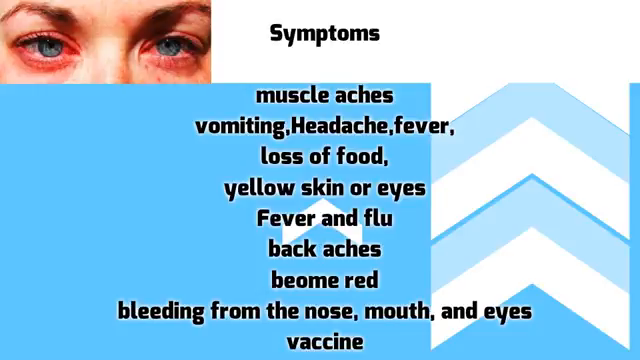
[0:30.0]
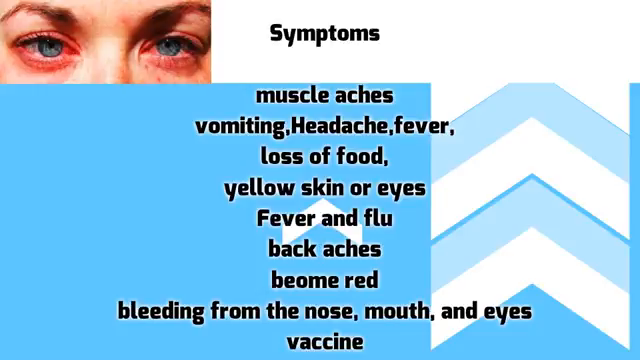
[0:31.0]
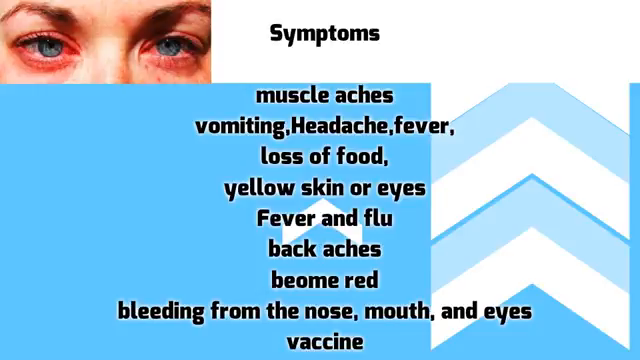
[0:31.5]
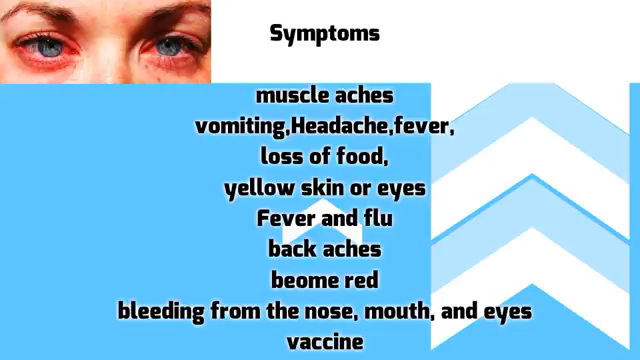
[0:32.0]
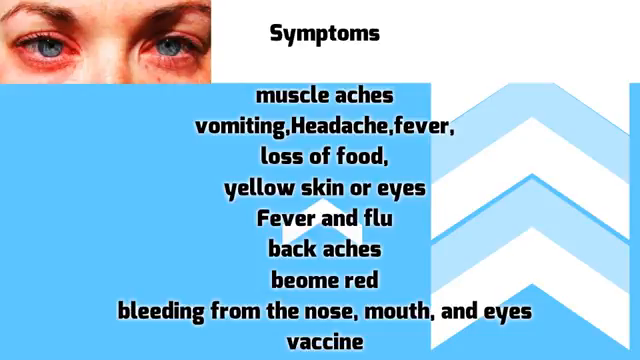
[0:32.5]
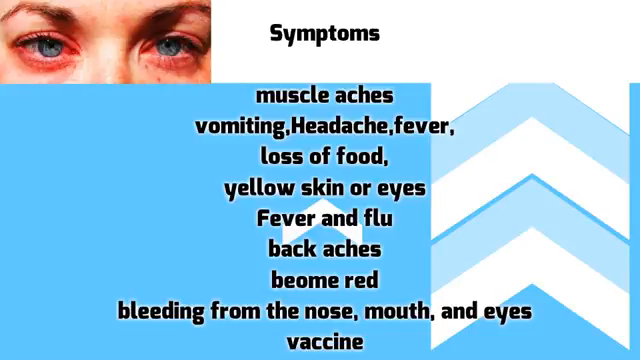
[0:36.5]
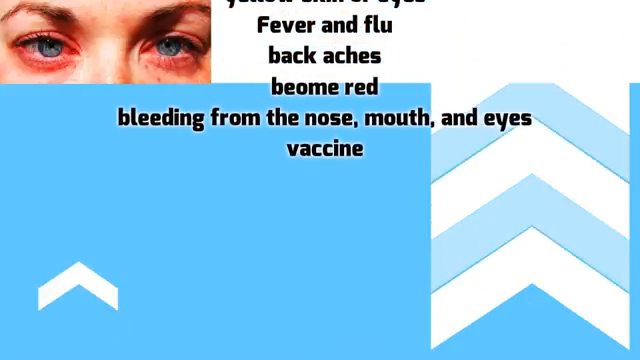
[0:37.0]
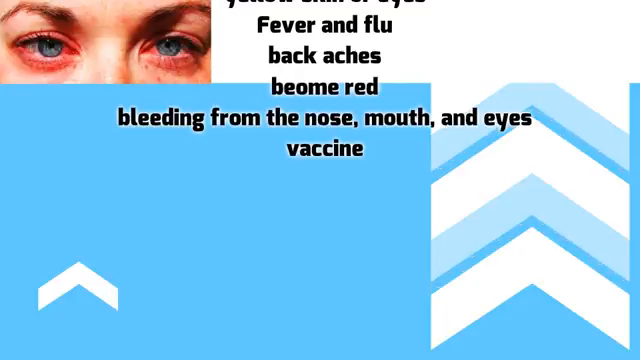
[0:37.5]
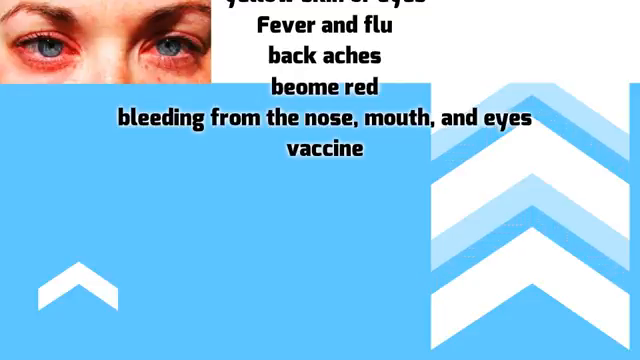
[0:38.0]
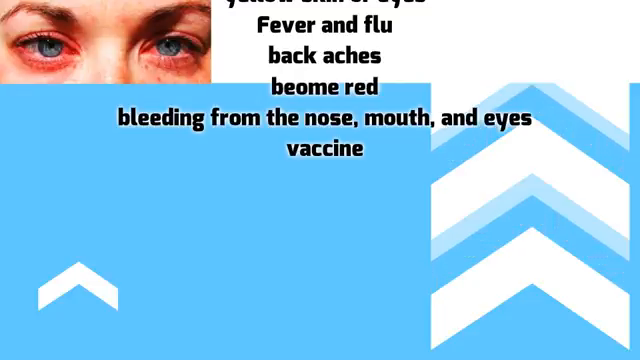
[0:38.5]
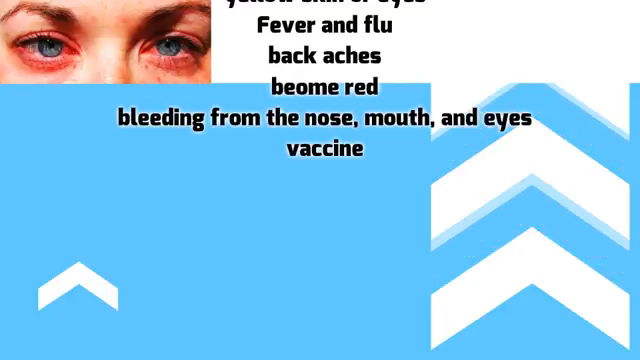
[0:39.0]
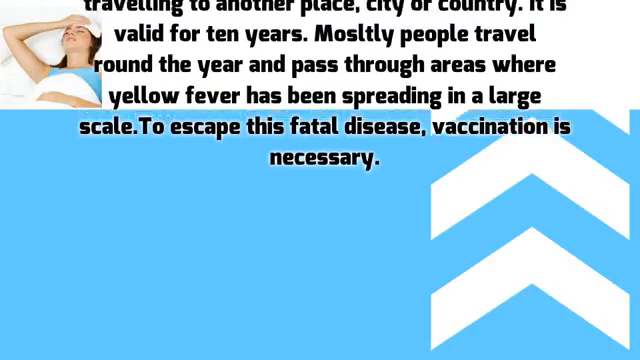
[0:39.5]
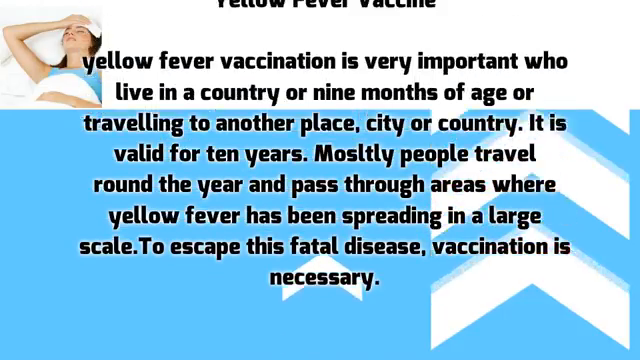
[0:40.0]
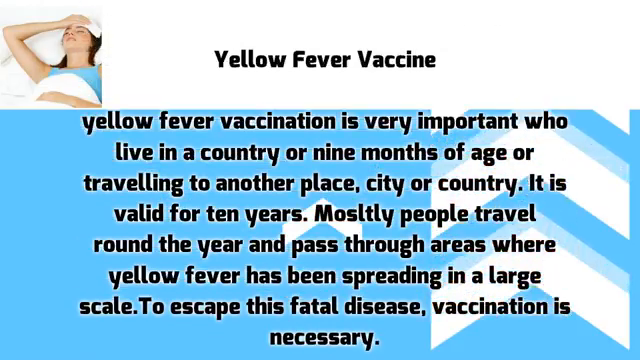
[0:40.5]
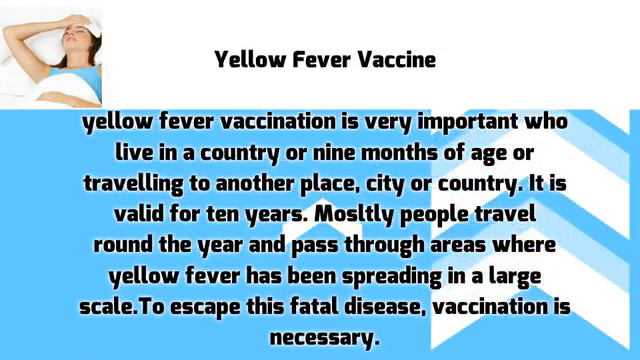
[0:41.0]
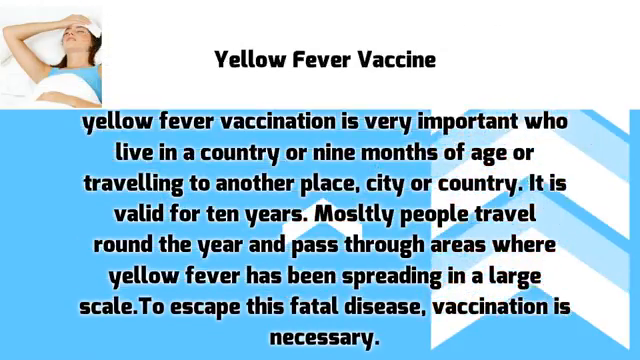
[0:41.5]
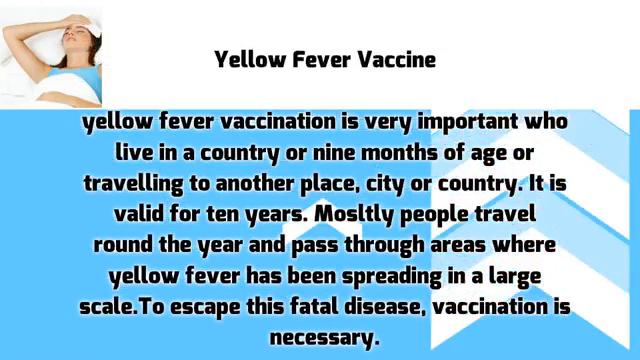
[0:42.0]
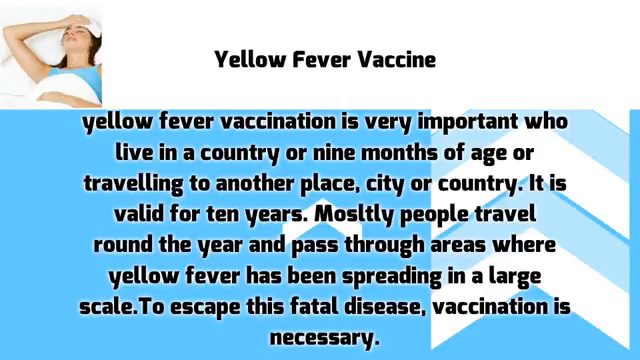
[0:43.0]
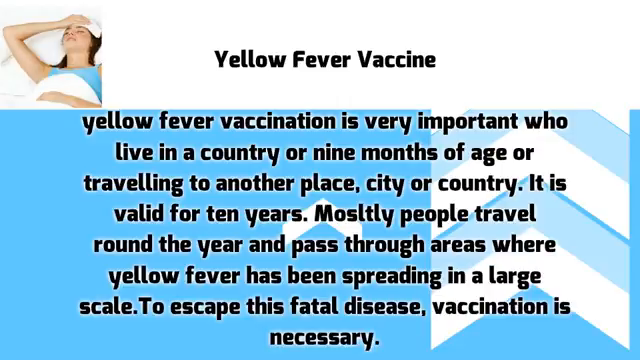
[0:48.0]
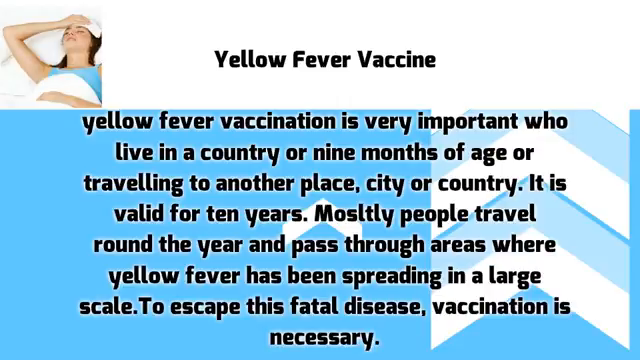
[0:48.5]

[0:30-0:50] The list of symptoms continues, with further items including backaches, eyes become red, and bleeding from the nose, mouth and eyes. The word "become" before "red" is misspelled, missing a "c". The last item on the list is the word "vaccine". The next slide has black text swiping in from the top under the heading "yellow fever vaccine". To the left is a thumbnail of a woman in a blue blouse on a bed, covered in a white sheet; she holds a towel over her forehead with her right arm and looks ill. The text states that yellow fever vaccination is very important for those who live in a country where it is prominent, are nine months of age, or are traveling to another place, city or country, and that the vaccine lasts for 10 years. It continues: "Mostly people travel around the year and pass through areas where yellow fever has been spreading in a large scale. To escape this fatal disease, vaccination is necessary." Many of the words in the text are misspelled. The yellow fever vaccine text stays on the screen.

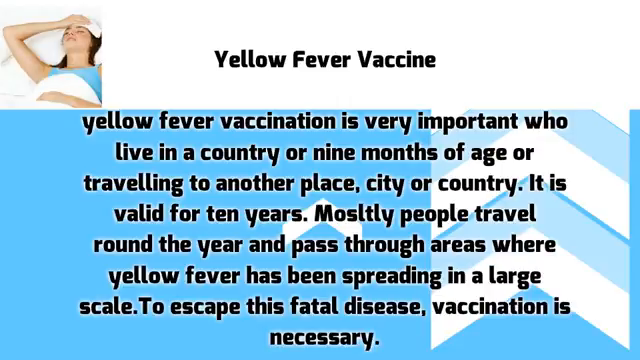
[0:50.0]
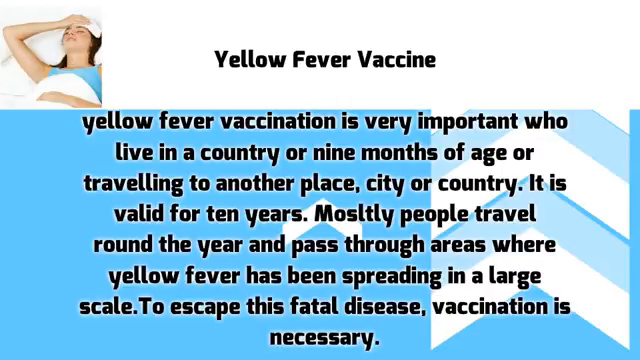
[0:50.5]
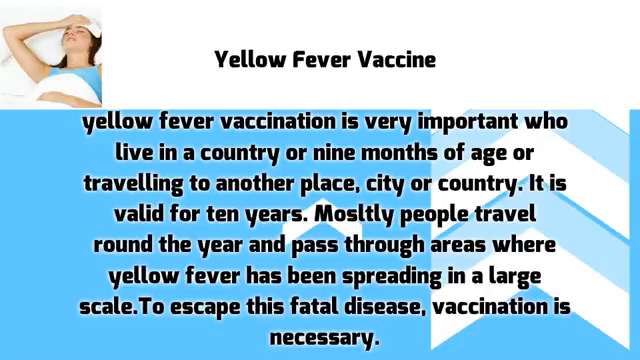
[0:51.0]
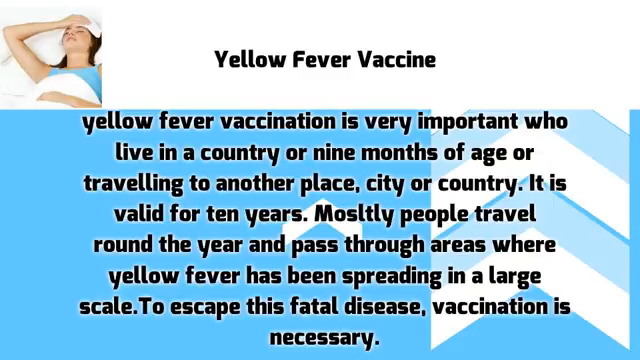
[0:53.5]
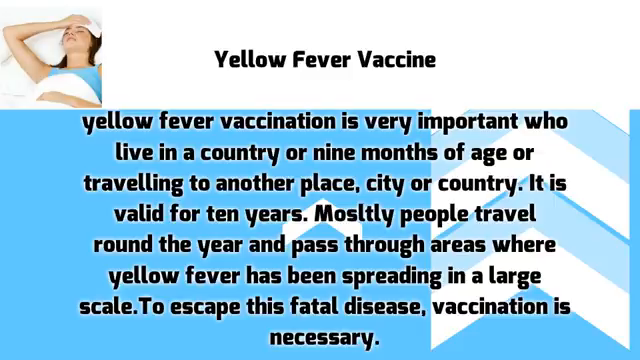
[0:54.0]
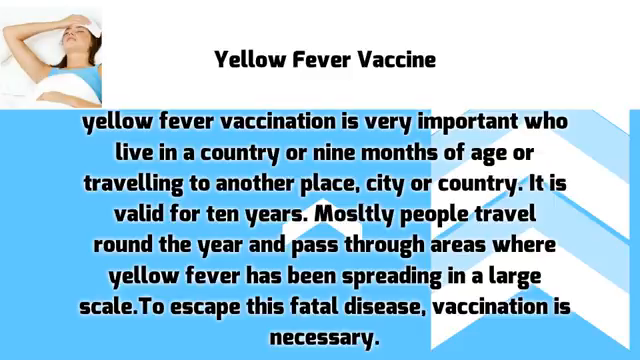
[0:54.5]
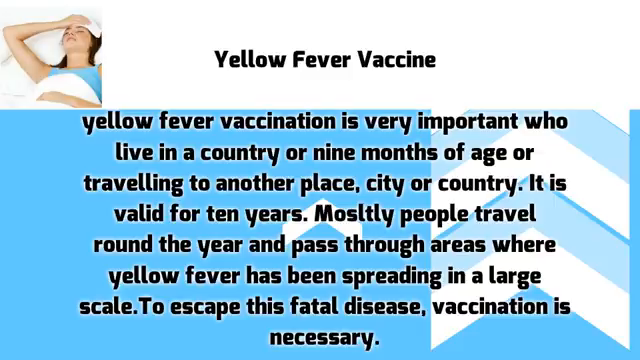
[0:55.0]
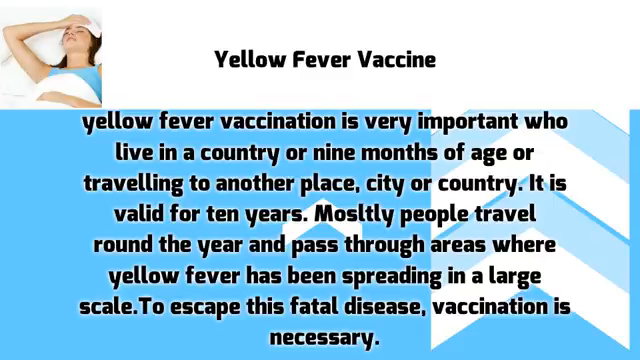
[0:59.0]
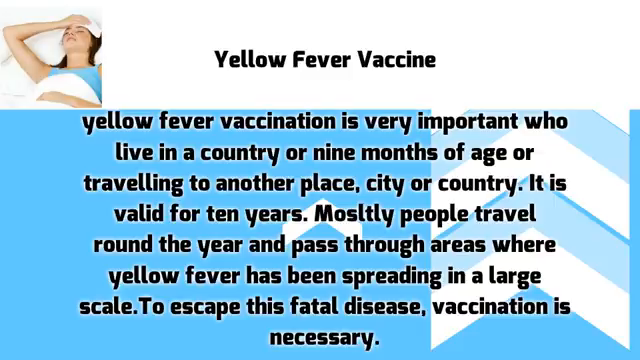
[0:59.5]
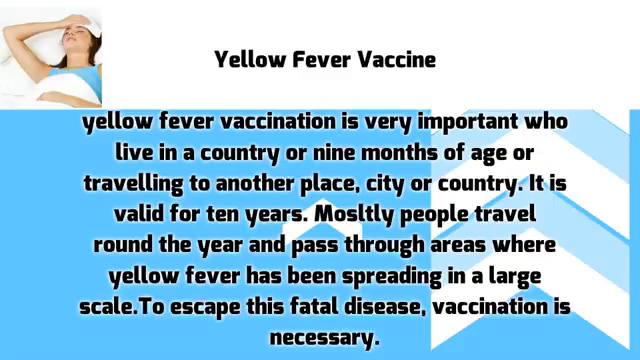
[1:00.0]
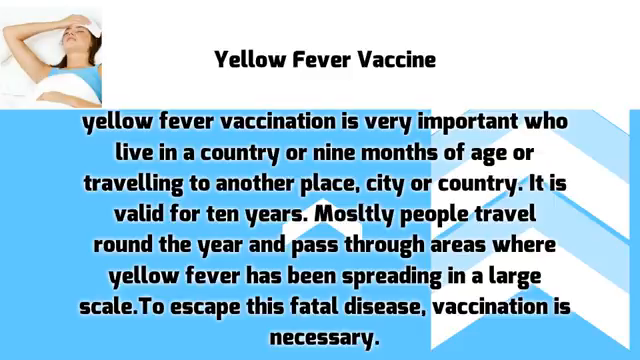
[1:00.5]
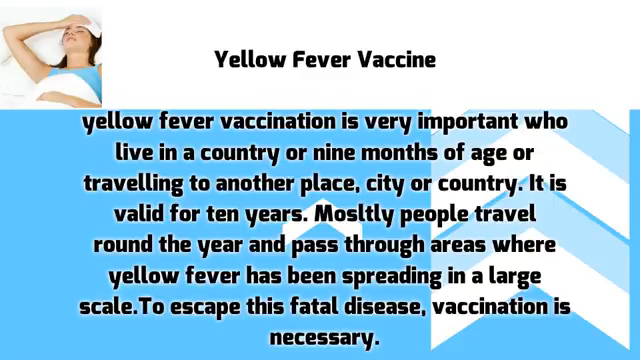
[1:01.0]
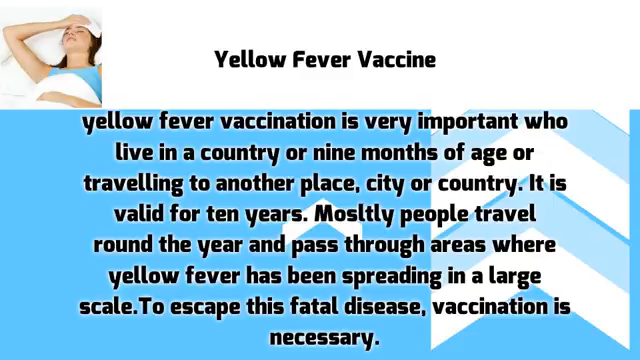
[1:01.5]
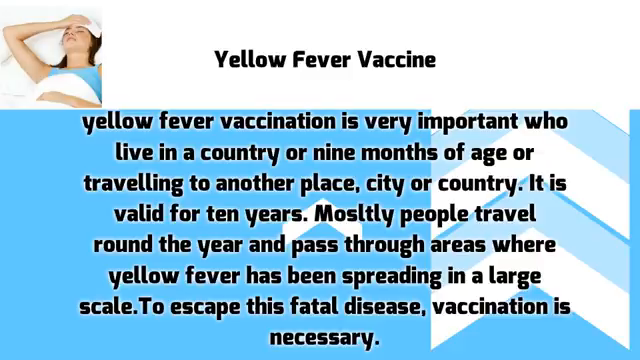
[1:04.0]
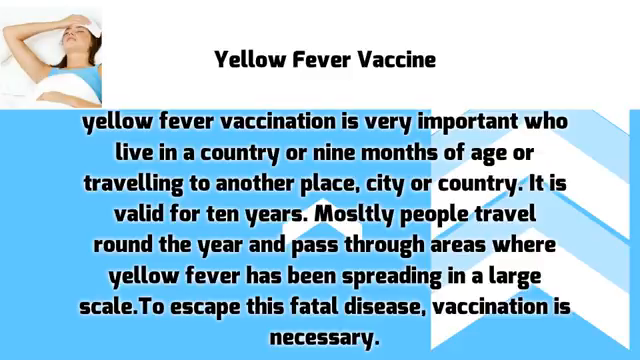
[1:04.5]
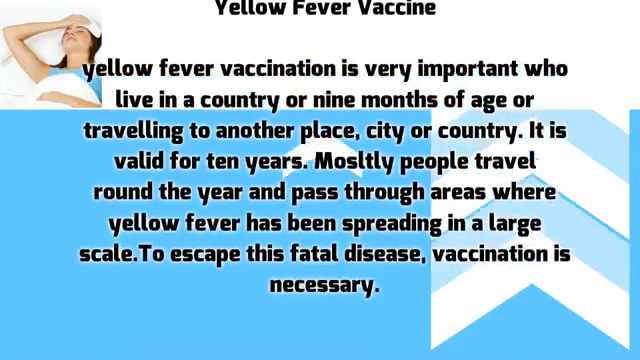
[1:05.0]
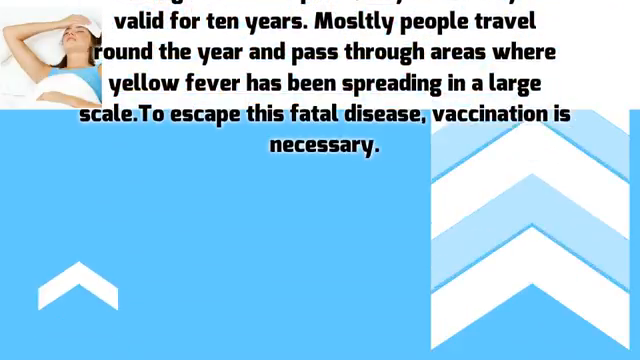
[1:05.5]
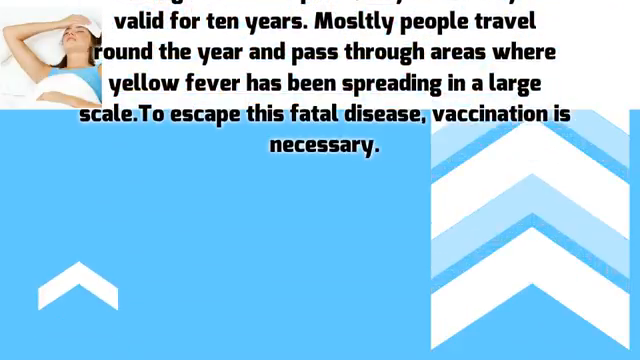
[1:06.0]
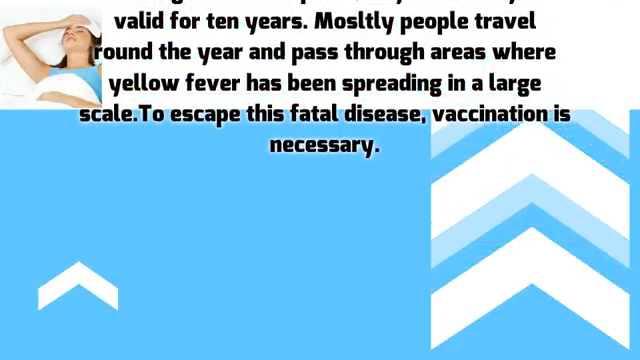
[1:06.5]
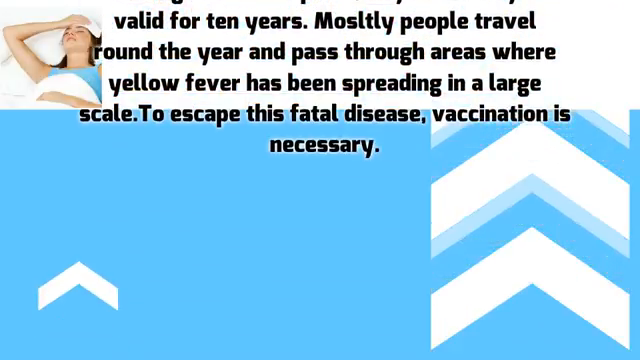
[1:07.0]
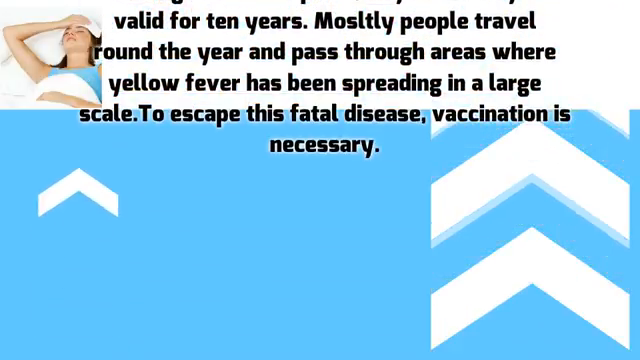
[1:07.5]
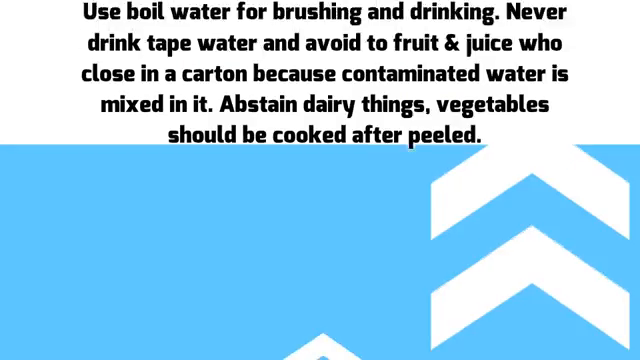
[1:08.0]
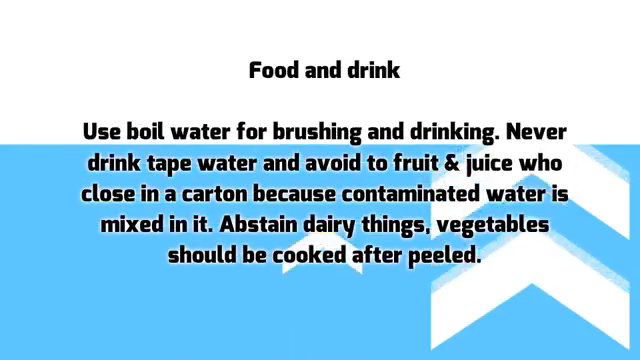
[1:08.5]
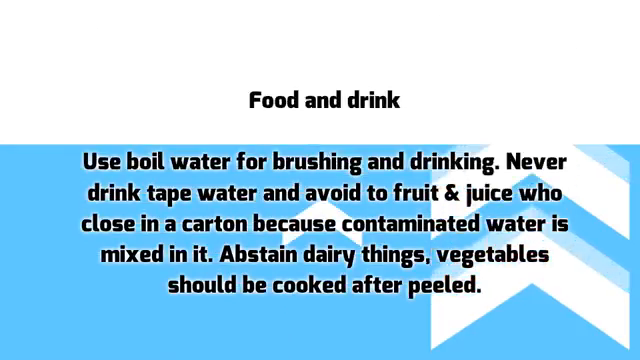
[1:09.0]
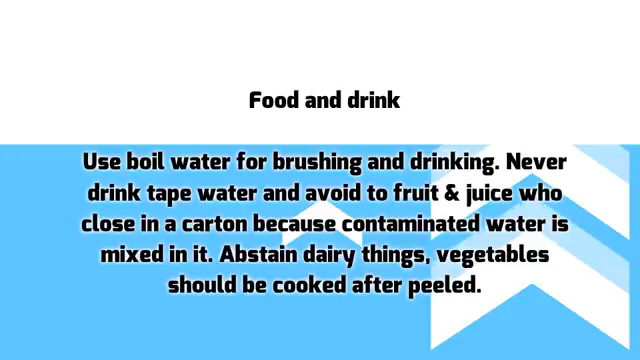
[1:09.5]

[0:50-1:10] The explanatory text about the yellow fever vaccine is still on screen. A blue and white background occupies the bottom two-thirds of the screen and a white bar occupies the top third, with the picture of the woman in bed still in the upper left. The text swipes vertically up, and more text appears under the heading "food and drink". It reads "use boiled water for brushing and drinking. Never drink tap water and avoid fruit and juice", and goes on to advise abstaining from dairy and cooking vegetables after peeling them. Many misspellings appear in the text. Then "yellow fever vaccine" appears at the top with the same text as before below it. It stays on screen, then swipes vertically up, and the food and drink screen appears again.